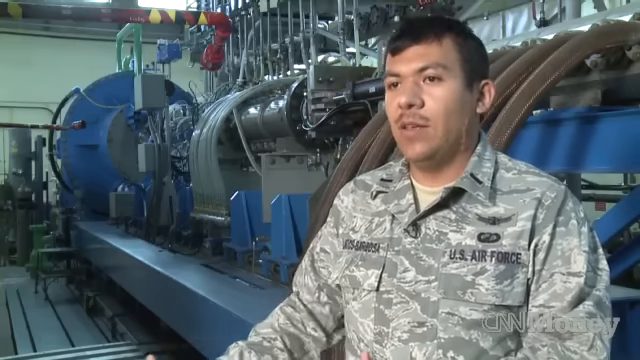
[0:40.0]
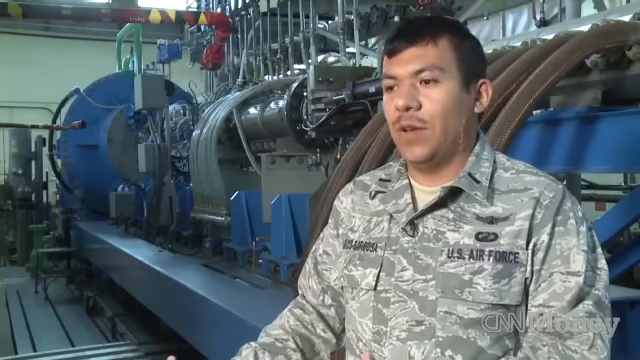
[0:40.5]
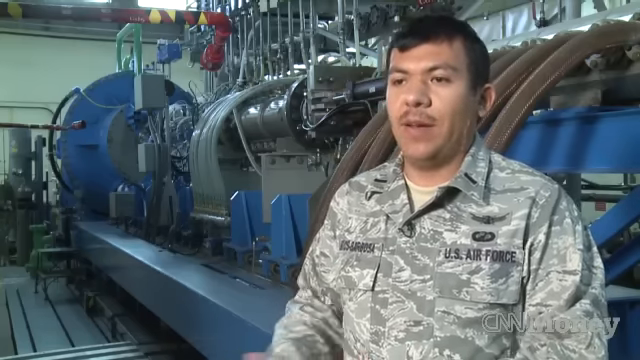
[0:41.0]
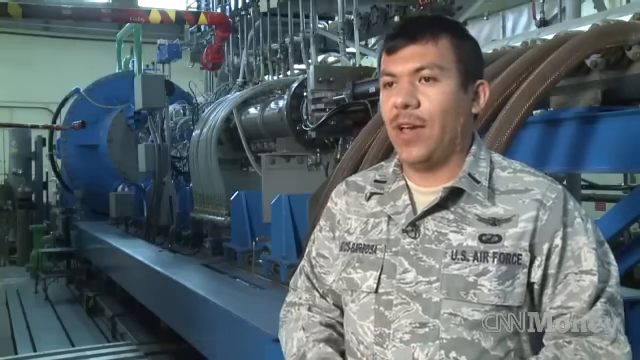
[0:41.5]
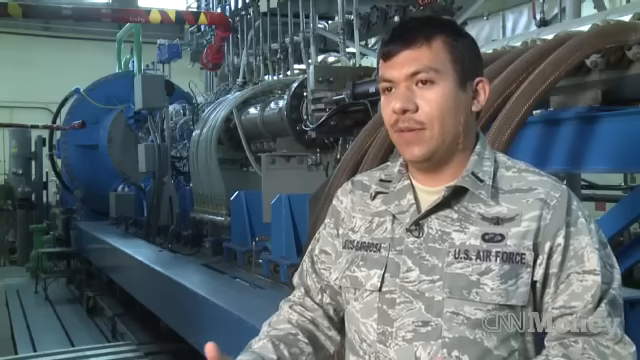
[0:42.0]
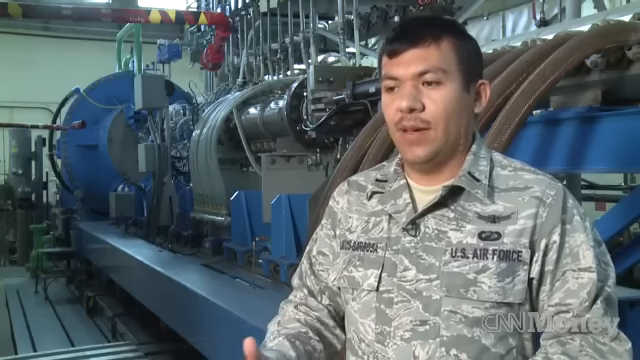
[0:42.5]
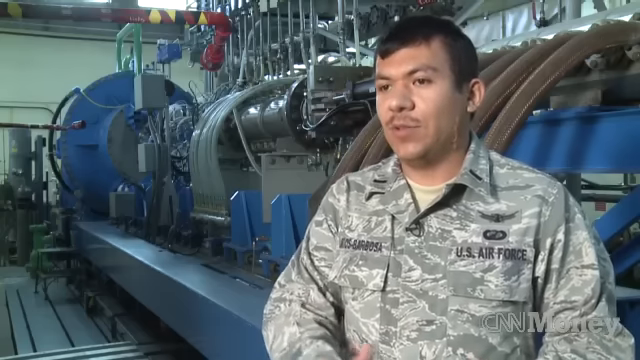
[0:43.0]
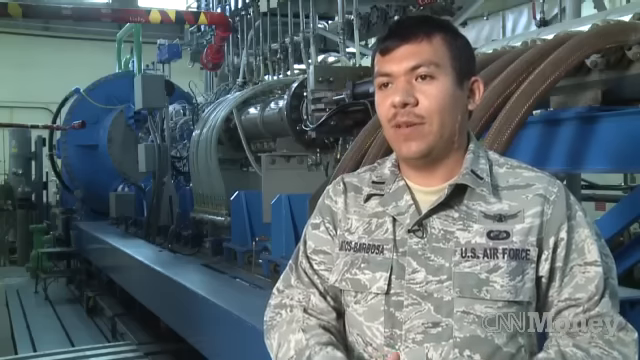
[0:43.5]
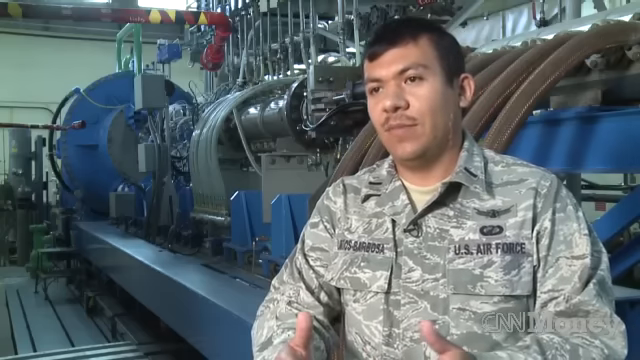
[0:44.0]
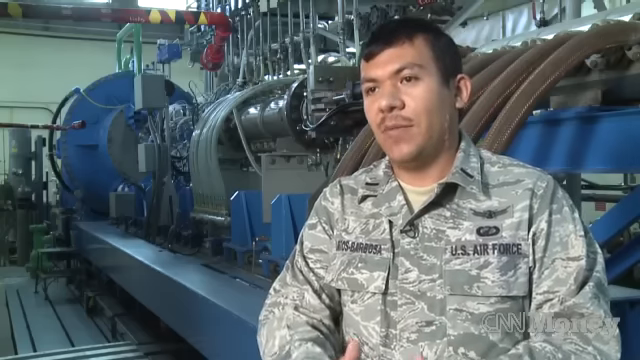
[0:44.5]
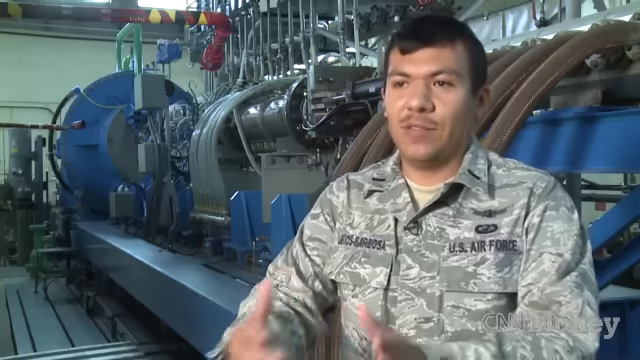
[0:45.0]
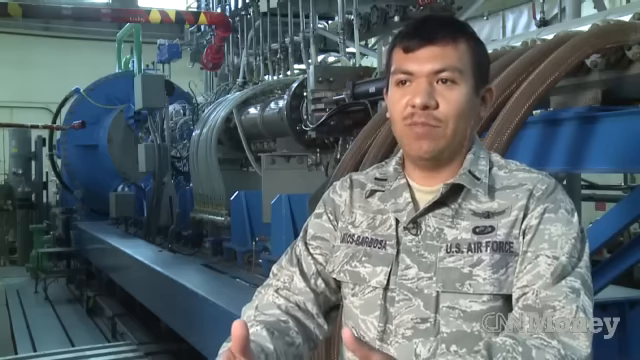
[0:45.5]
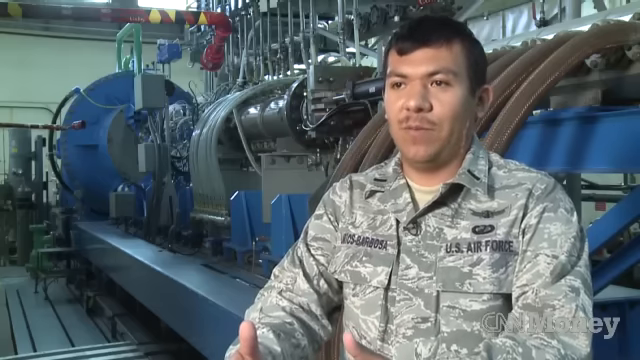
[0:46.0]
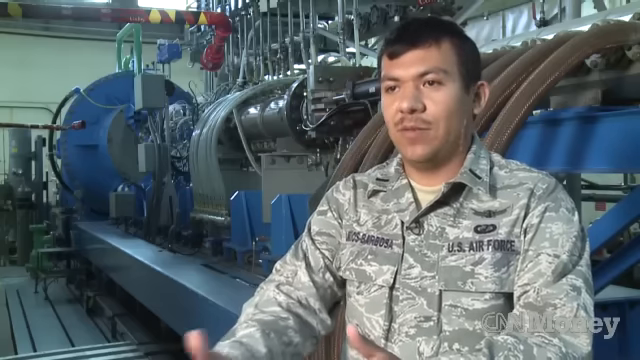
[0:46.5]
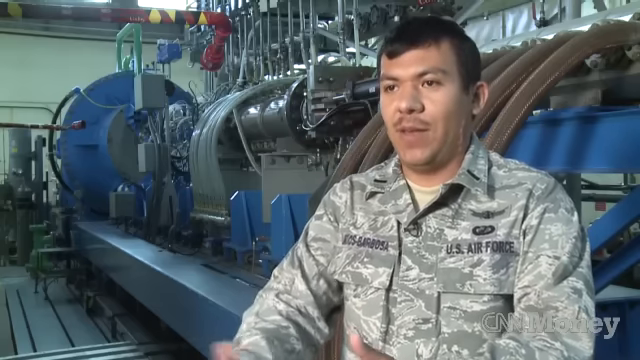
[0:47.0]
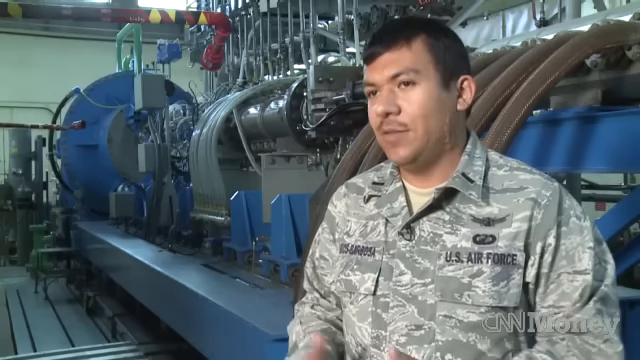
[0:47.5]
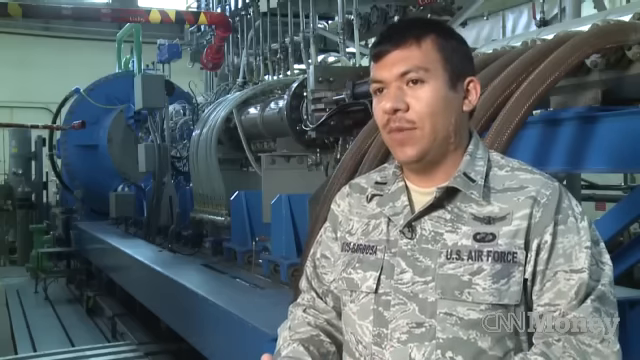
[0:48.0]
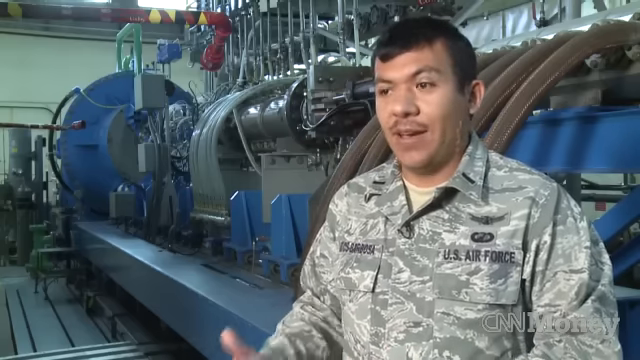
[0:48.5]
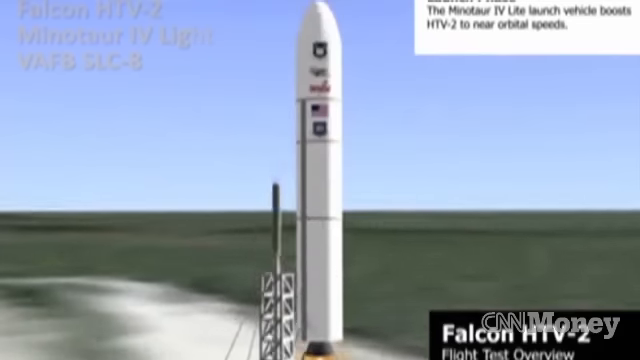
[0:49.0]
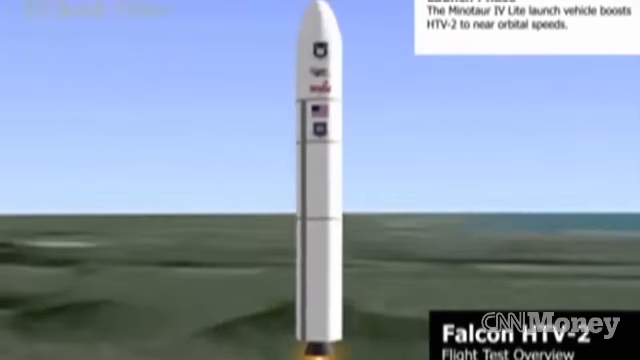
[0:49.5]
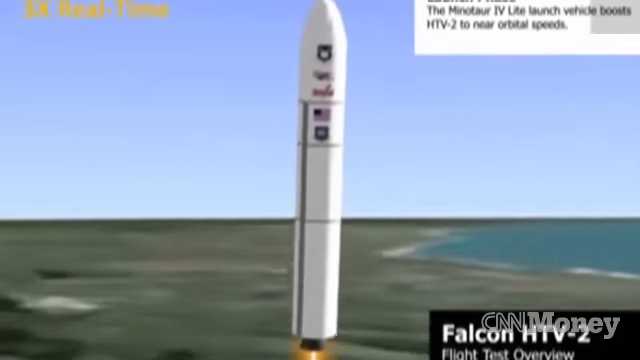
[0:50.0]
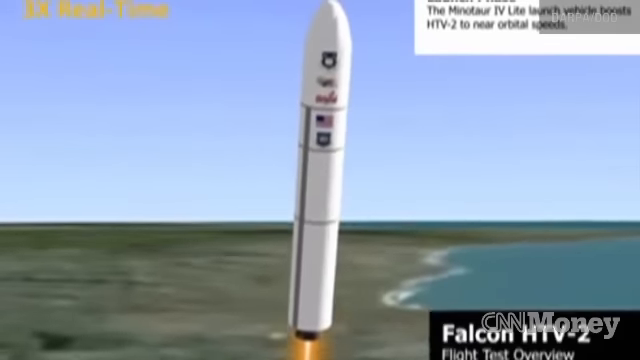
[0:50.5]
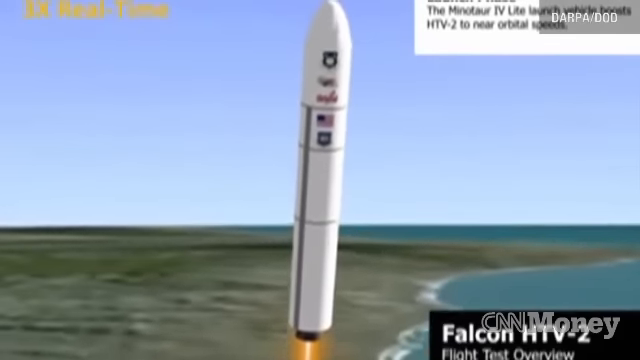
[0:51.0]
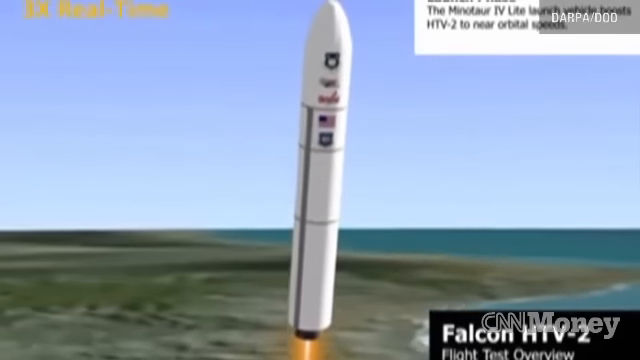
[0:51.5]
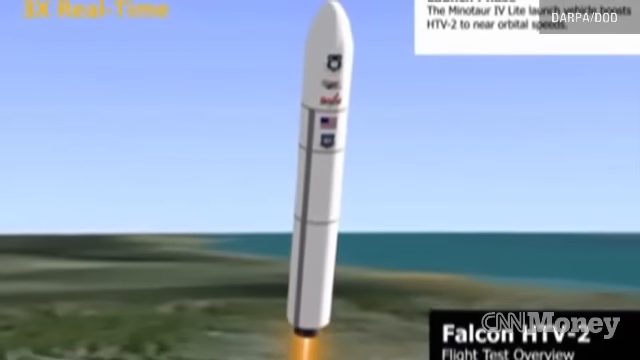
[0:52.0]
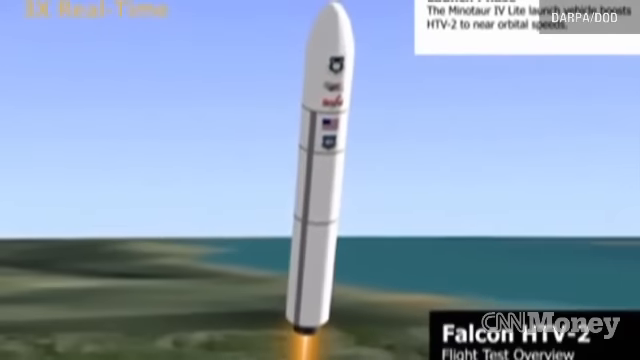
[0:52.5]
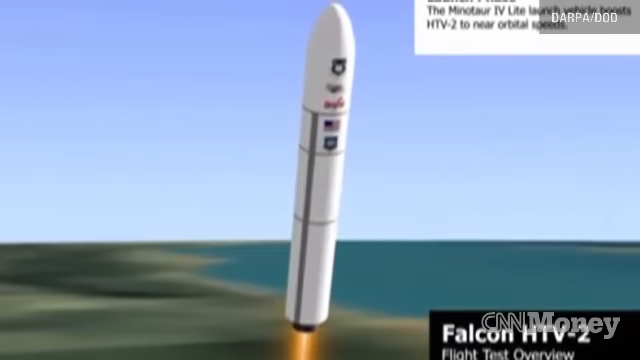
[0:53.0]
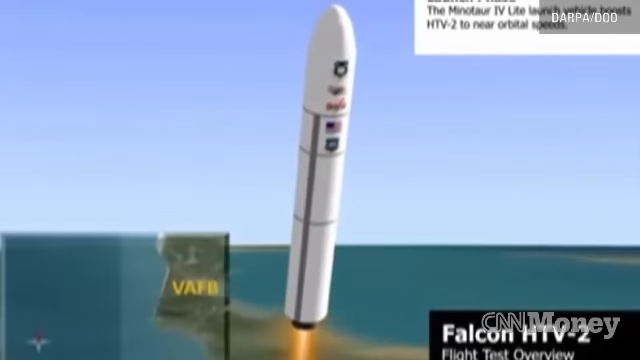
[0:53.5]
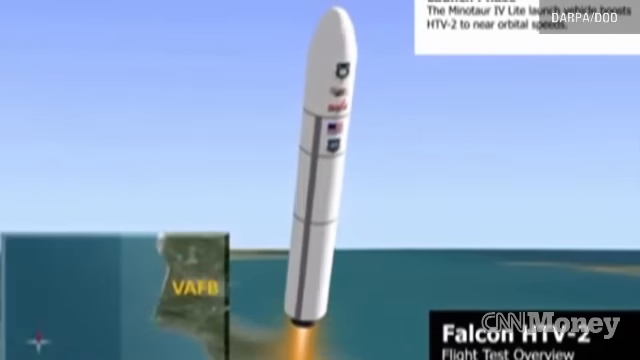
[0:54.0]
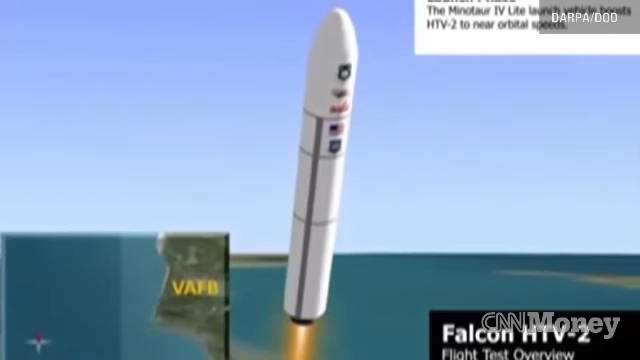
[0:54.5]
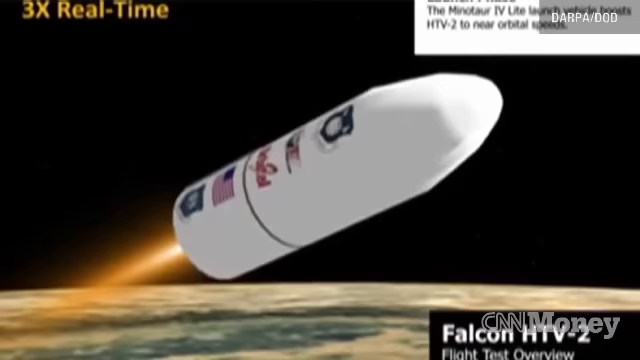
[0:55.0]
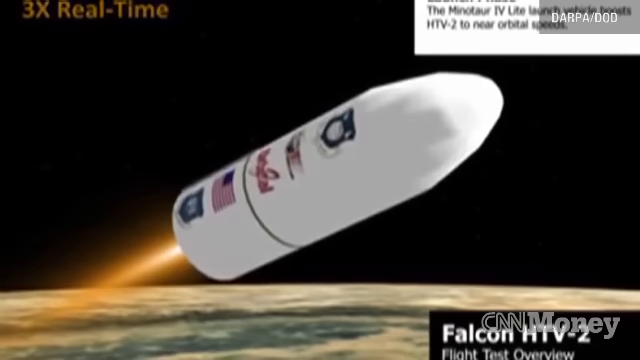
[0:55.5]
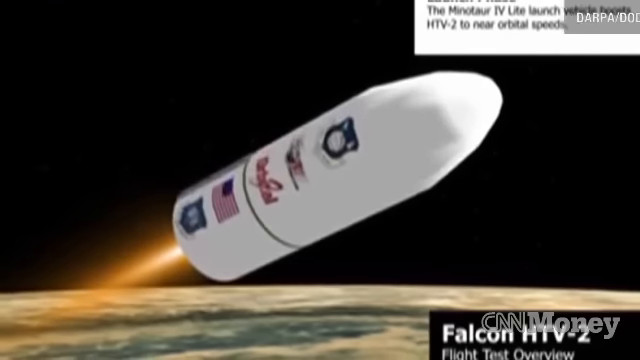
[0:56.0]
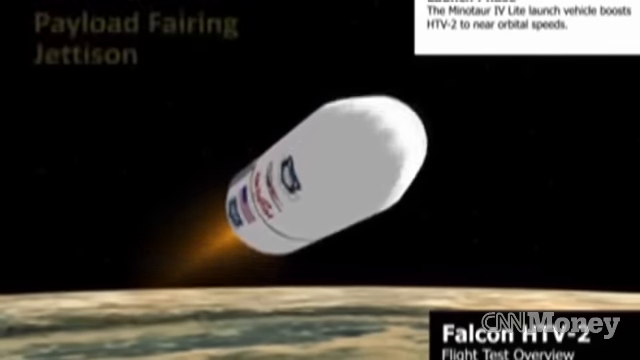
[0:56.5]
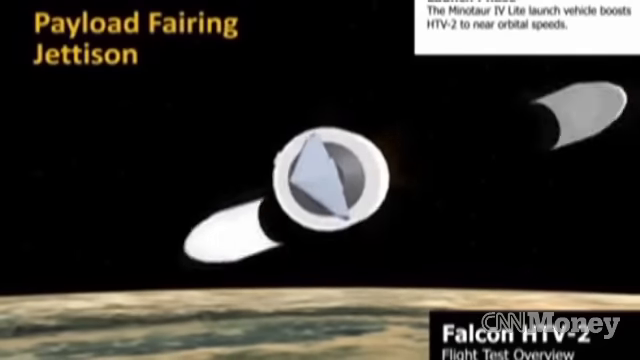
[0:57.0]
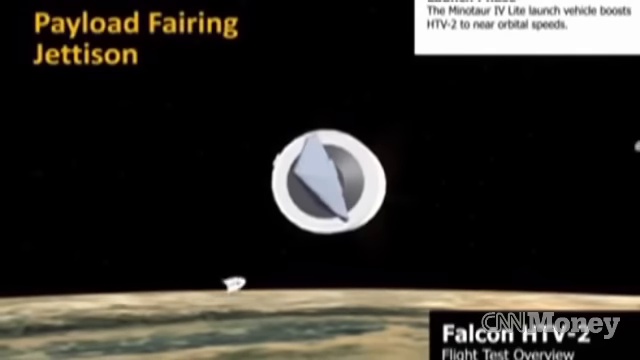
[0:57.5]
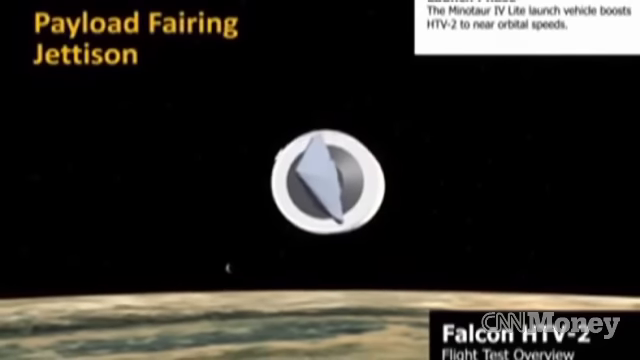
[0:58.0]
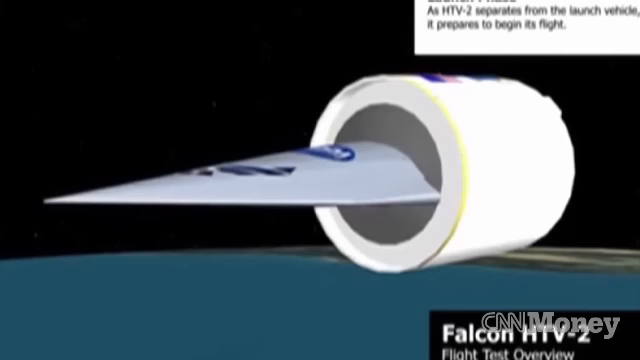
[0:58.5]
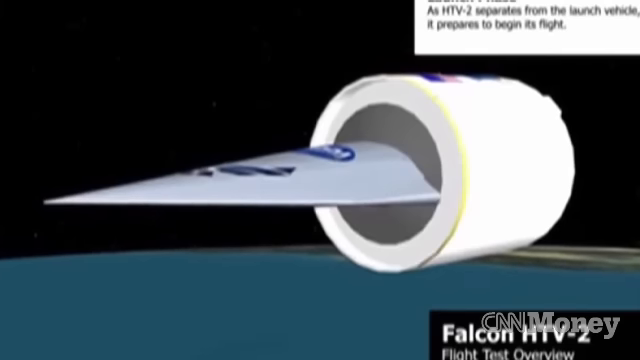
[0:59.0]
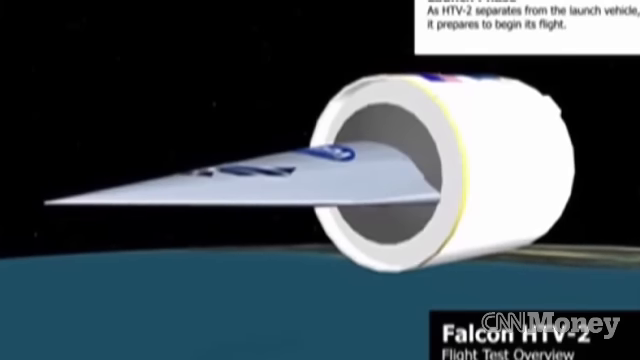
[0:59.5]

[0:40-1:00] The scene appears to be the research lab, where First Lieutenant Barbosa is talking in front of one of the large mechanical contraptions. The video then switches to a simulation done in color. Text on the left-hand side mentions HTV-2 along with other information about a light launch, vehicle boost, and HTV-2 entering orbital speeds, and text at the bottom reads "Falcon HTV-2." A rocket is on the launch pad getting ready to launch, then launches and takes off. The payload fairing jettisons, and other parts fall off.